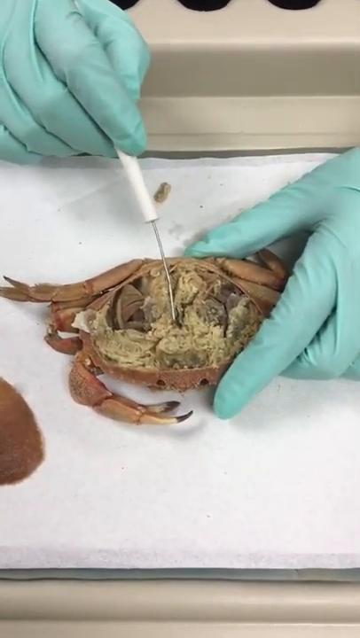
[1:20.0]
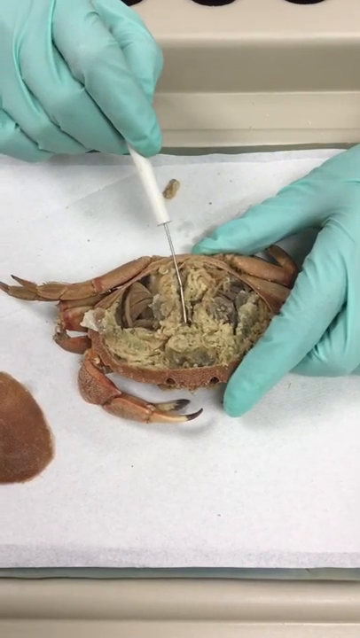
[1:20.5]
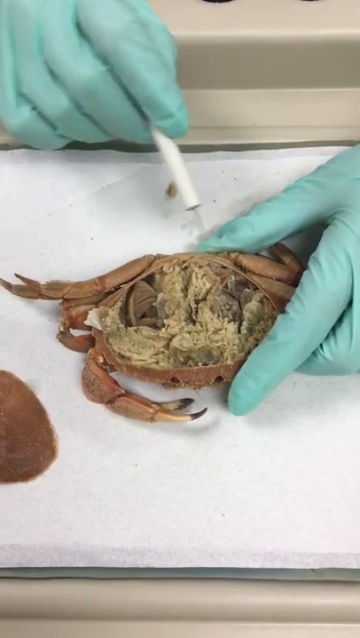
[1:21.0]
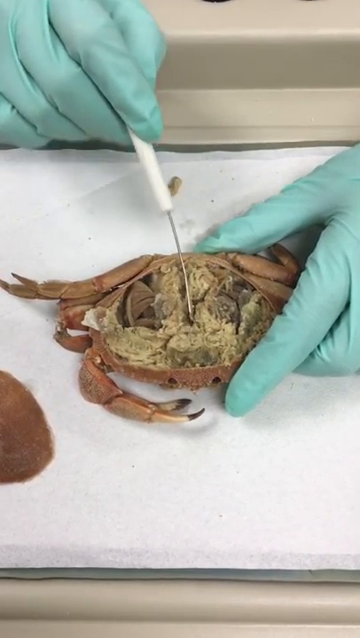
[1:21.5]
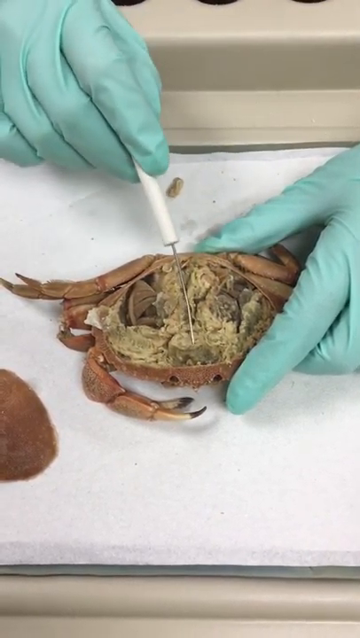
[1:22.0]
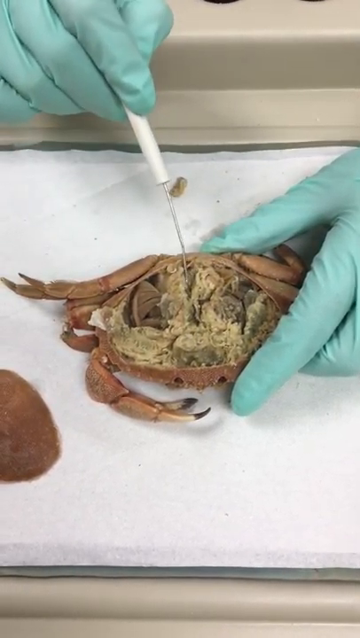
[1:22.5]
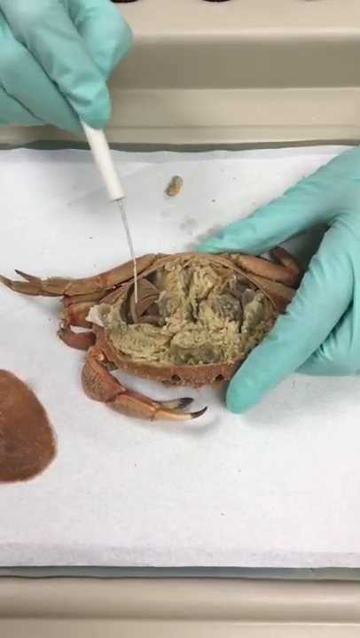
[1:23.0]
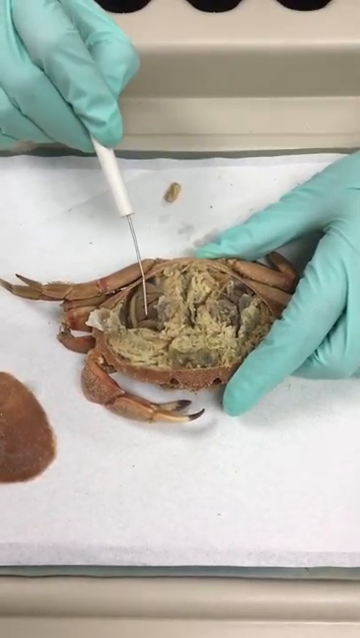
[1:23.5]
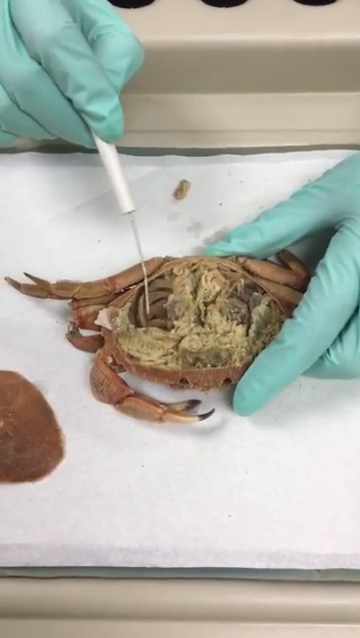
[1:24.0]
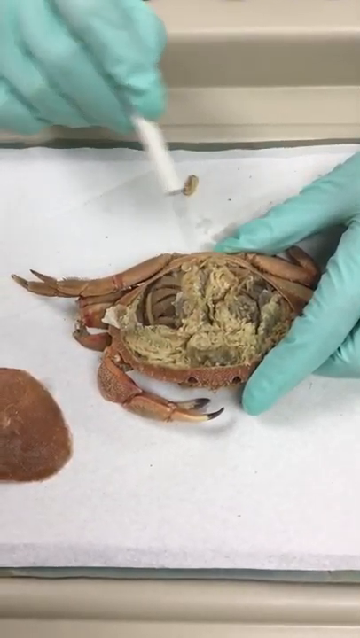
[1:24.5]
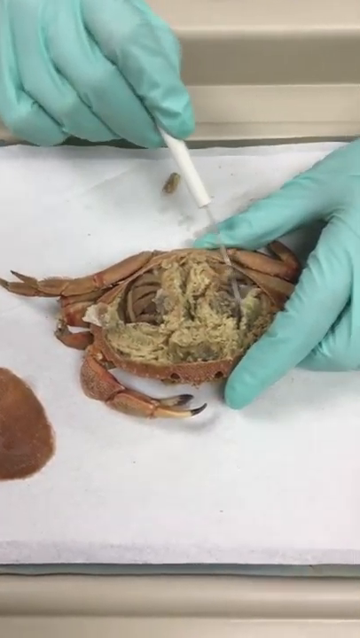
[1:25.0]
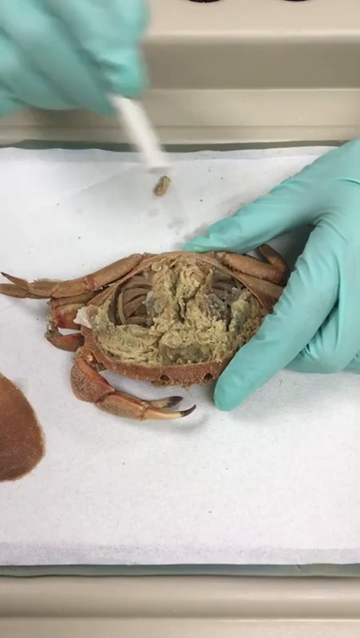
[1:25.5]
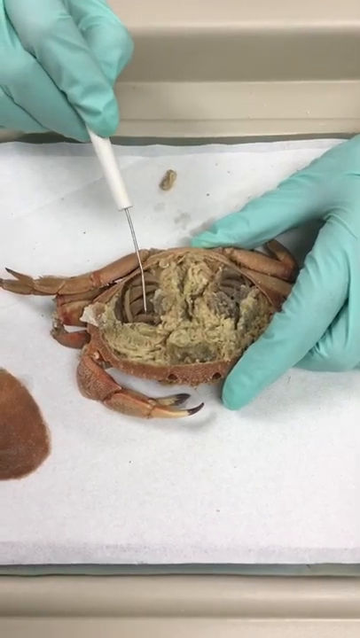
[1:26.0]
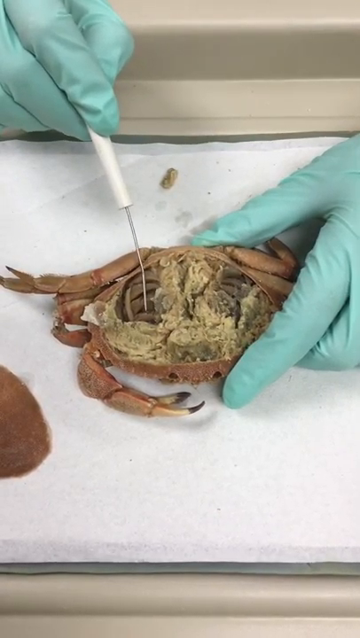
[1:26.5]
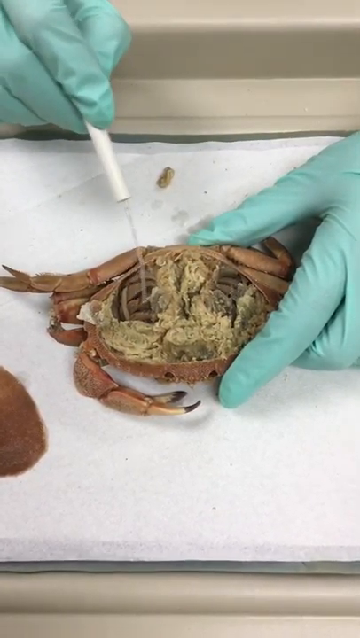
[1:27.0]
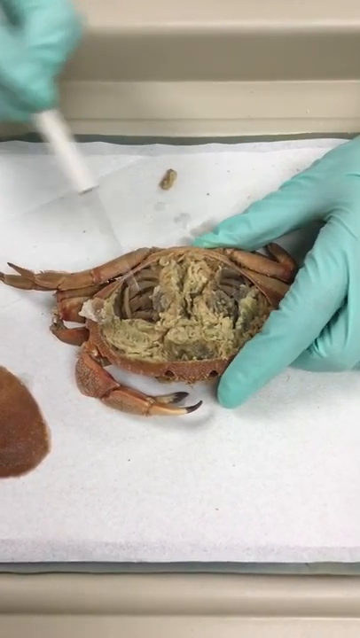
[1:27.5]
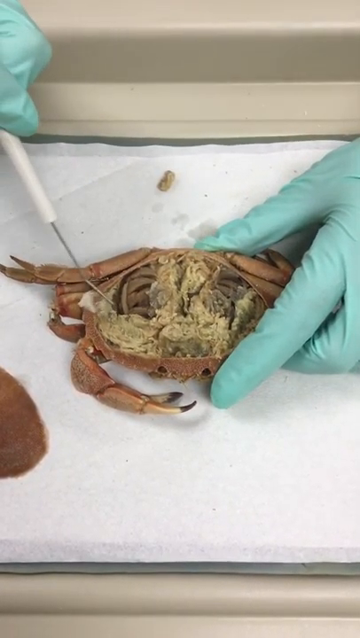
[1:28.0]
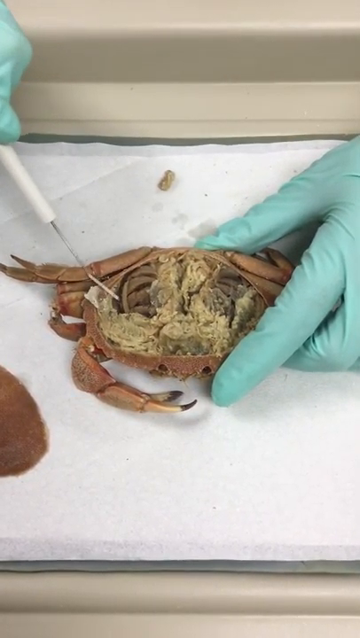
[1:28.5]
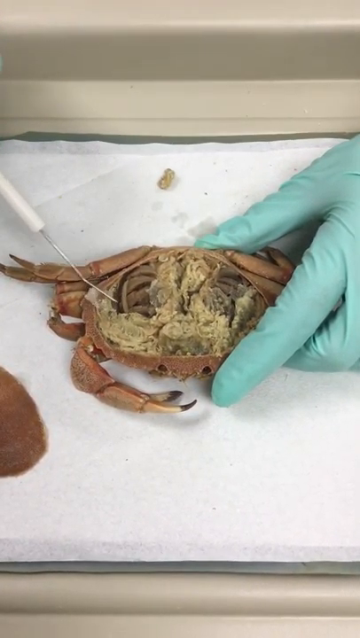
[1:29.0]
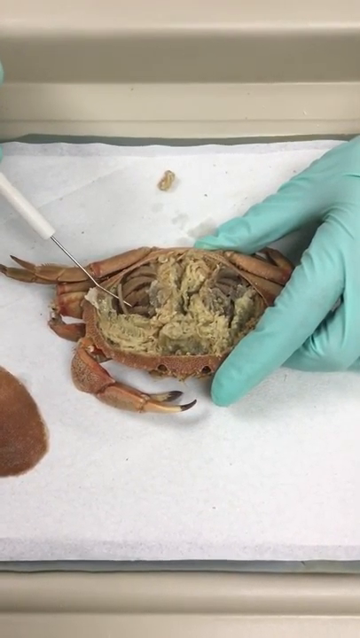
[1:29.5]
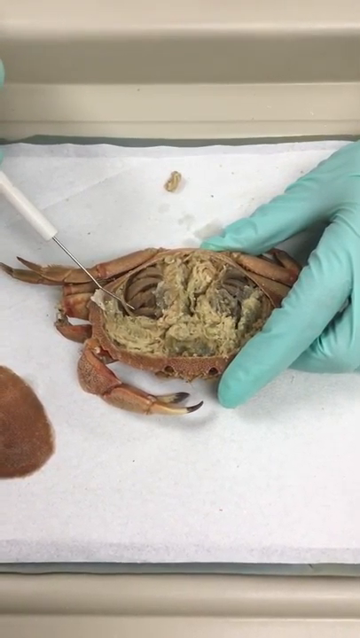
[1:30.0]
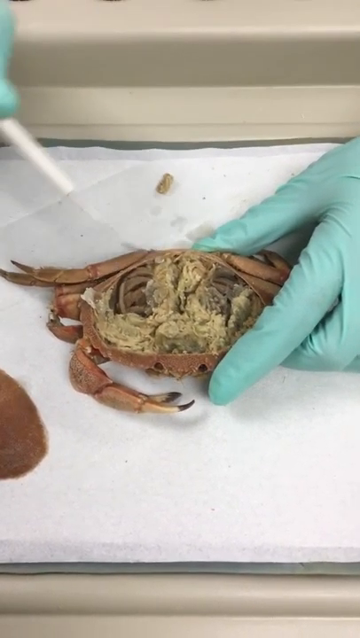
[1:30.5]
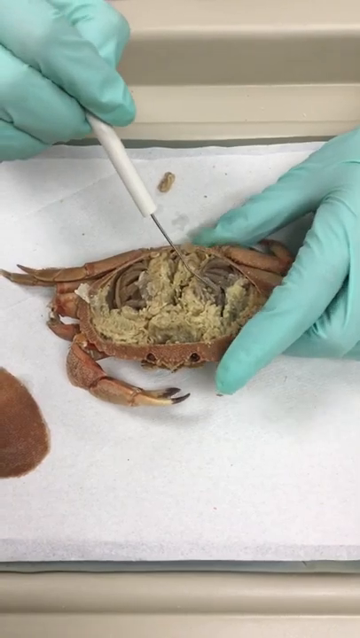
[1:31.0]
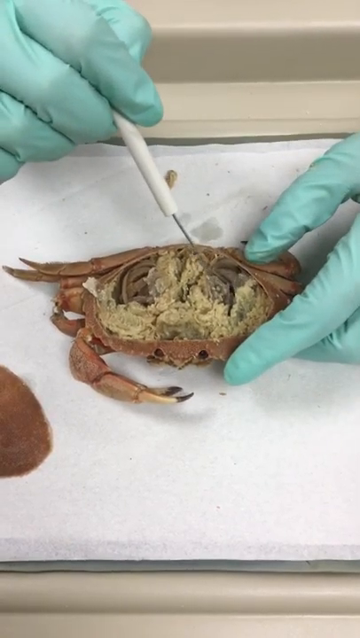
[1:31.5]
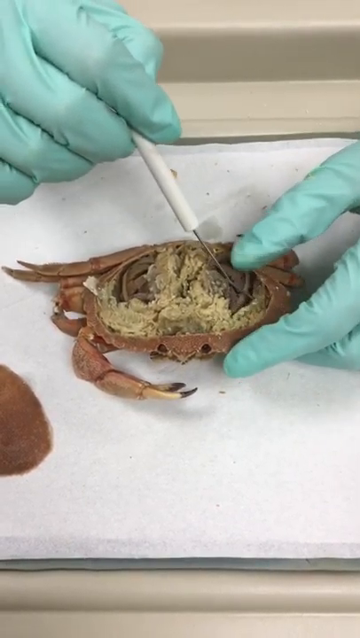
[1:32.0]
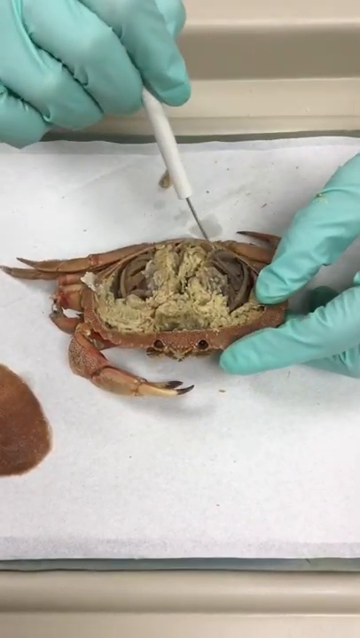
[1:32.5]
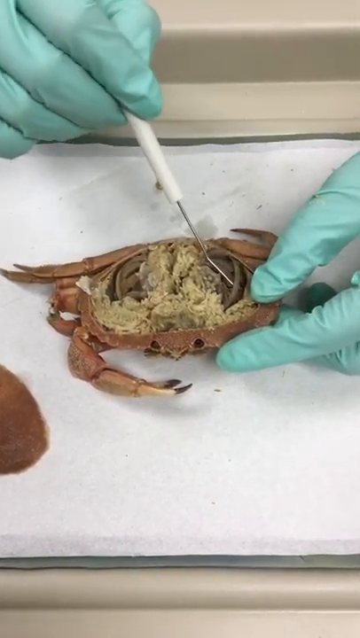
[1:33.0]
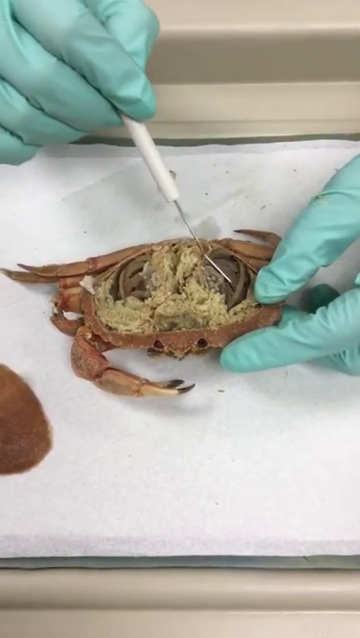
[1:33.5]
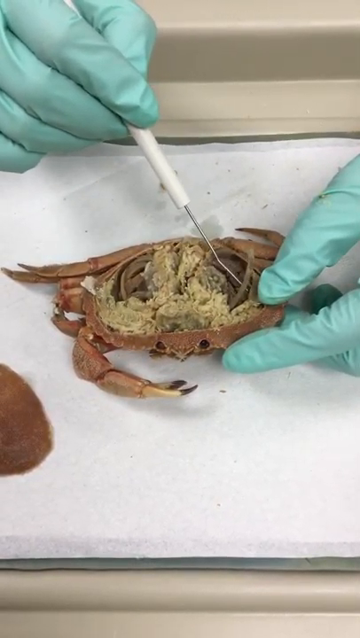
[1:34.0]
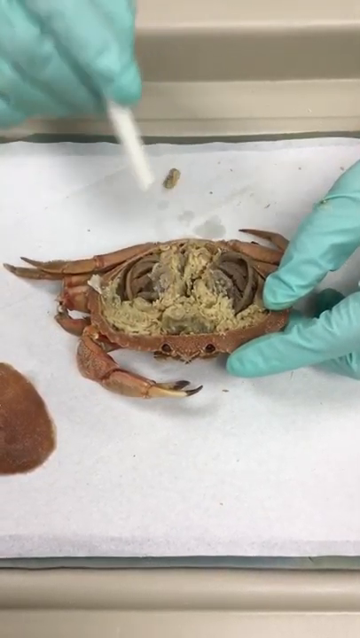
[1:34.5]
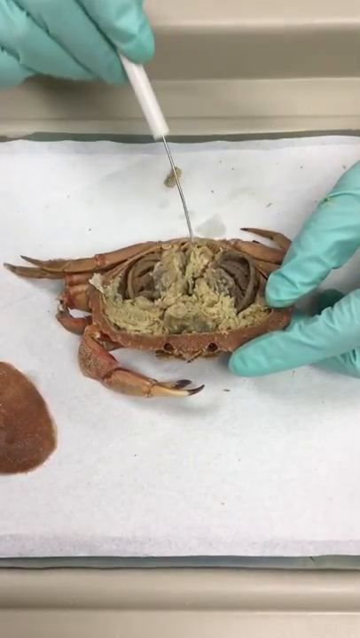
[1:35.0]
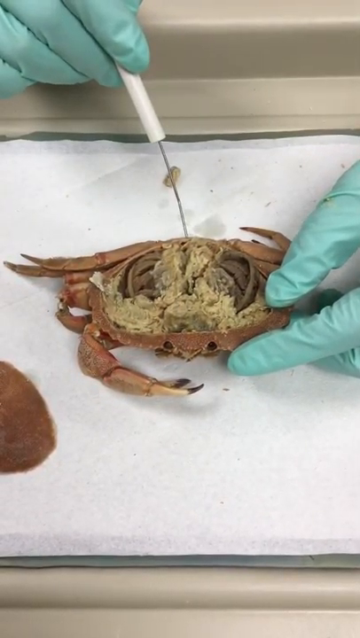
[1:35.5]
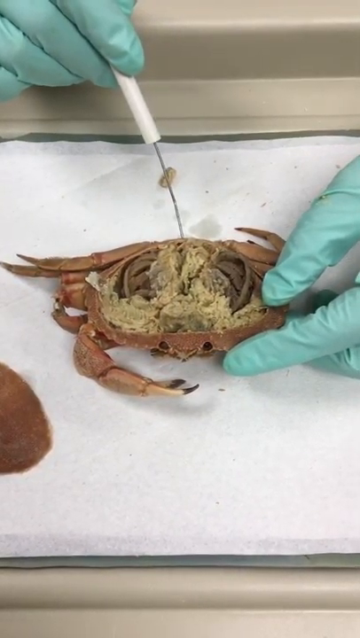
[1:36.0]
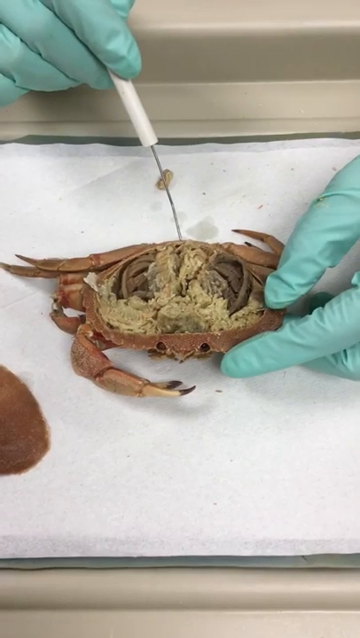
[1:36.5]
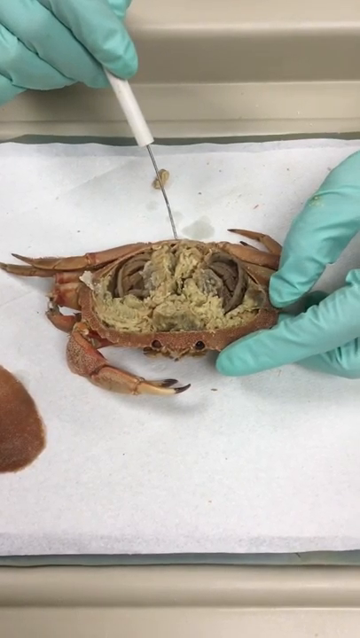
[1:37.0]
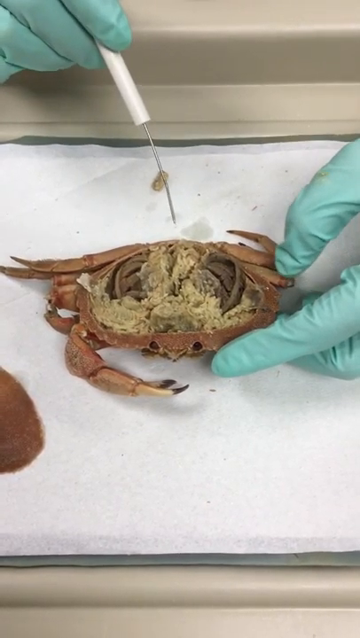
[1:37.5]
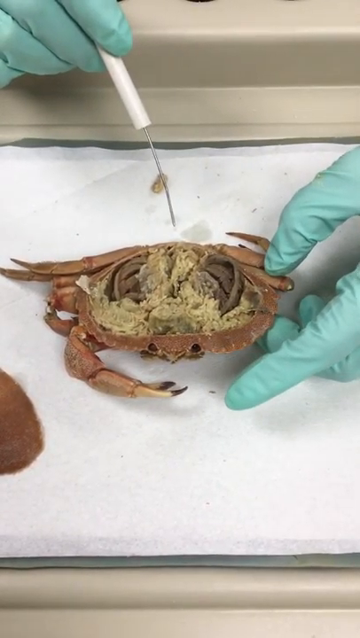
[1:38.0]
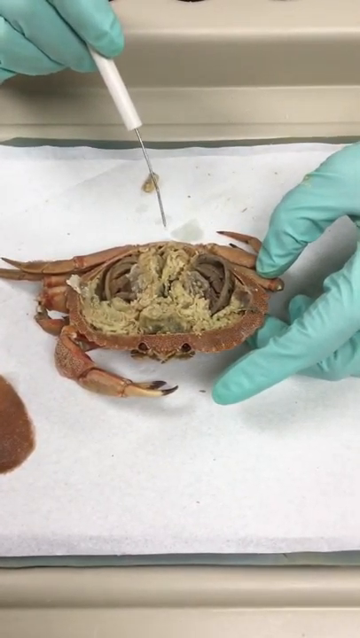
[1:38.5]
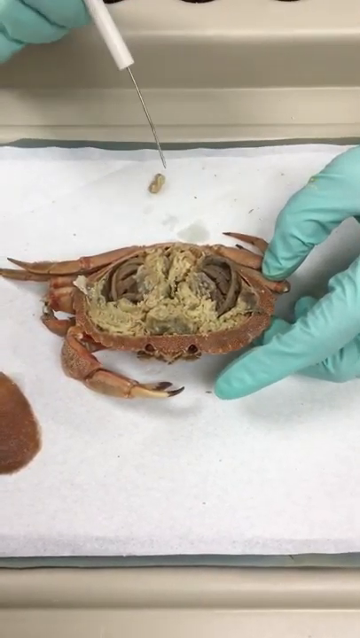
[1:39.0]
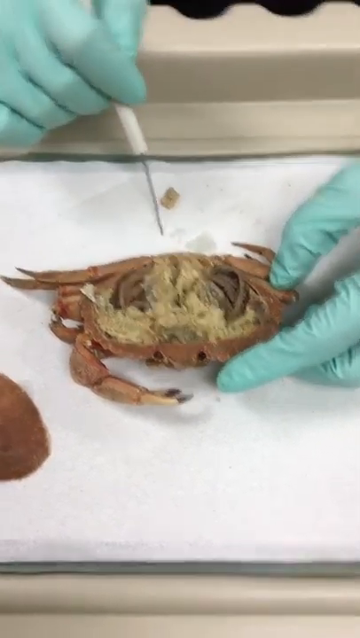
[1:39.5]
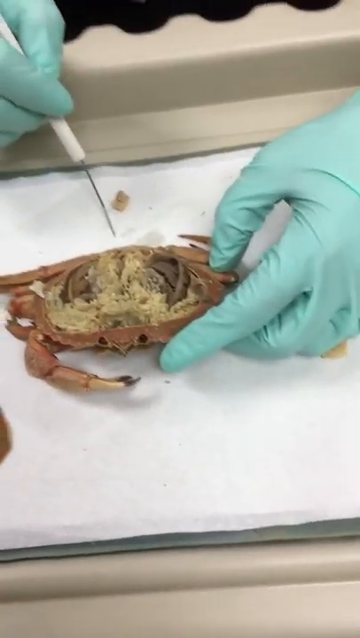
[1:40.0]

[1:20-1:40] Two gloved hands dissect a little red crab. The left hand holds the crab primarily with its index finger and thumb. The right hand holds an instrument, needle-like at the end, used for poking, prodding and pulling up tissues out of the crab. It moves the tissue from one side to another to expose additional tissue underneath that looks different: the tissue on top is crumbly looking and off-tan white, while the tissue underneath is more stringy and a darker gray. Little bits of tissue that have fallen out lie on the paper around the crab. The instrument has a white, straw-like plastic handle and a needle-like protrusion at the end that sticks out and then bends down slightly; it is approximately two and a half inches long. The crab faces the viewer, with its eyes visible along with its right claw, which has black tips on both edges of the claw. The top of the crab's carapace, cut off and removed, is seated neatly to the right of the crab on the table.